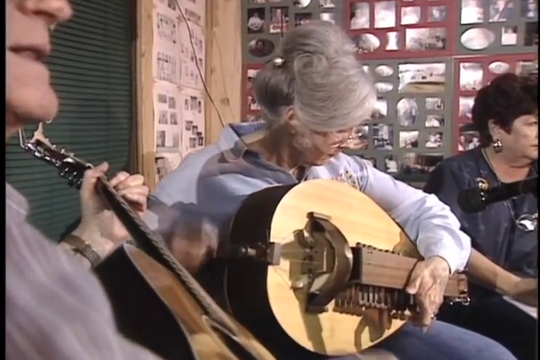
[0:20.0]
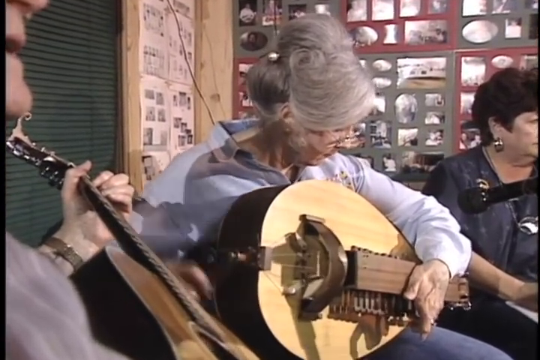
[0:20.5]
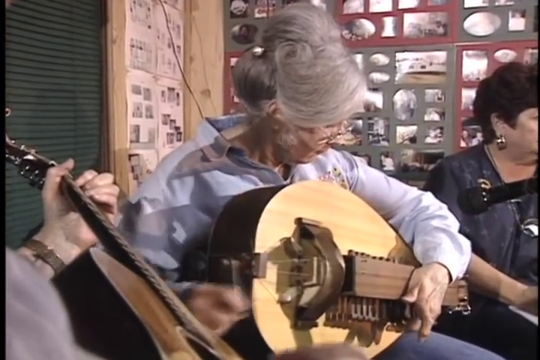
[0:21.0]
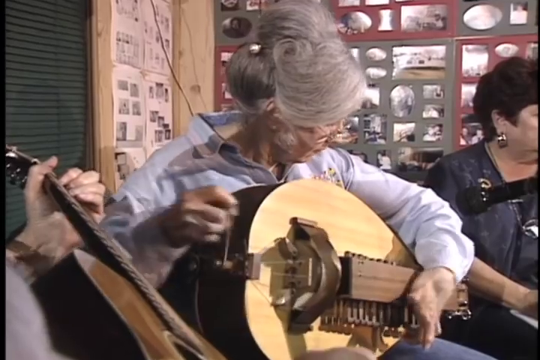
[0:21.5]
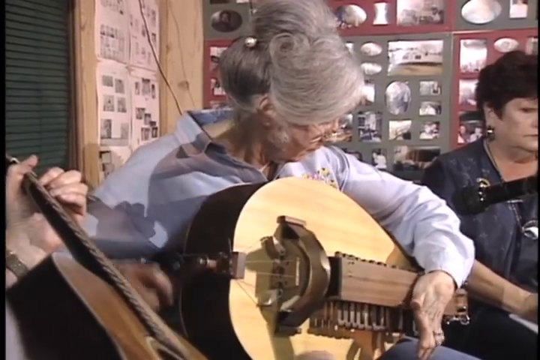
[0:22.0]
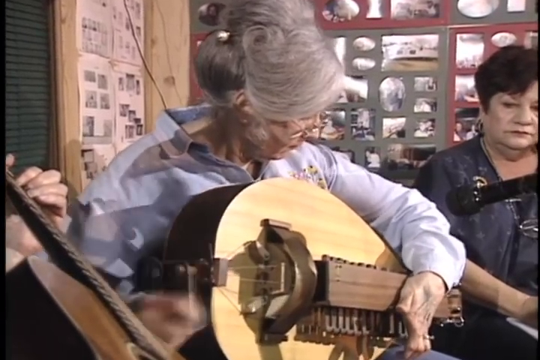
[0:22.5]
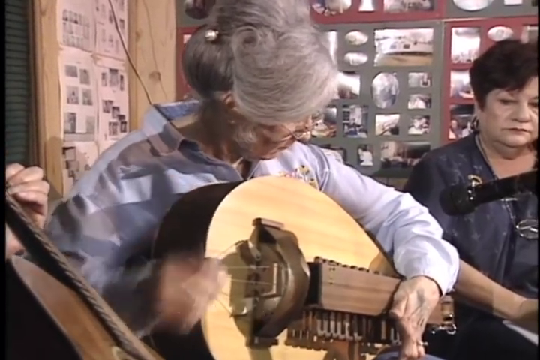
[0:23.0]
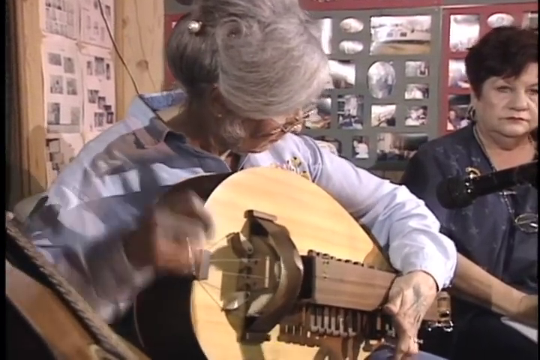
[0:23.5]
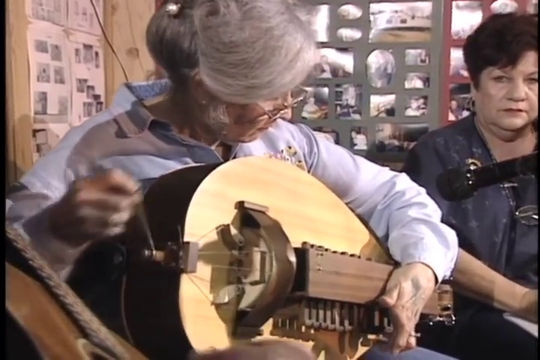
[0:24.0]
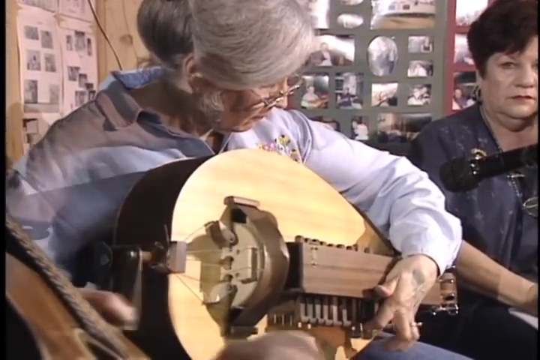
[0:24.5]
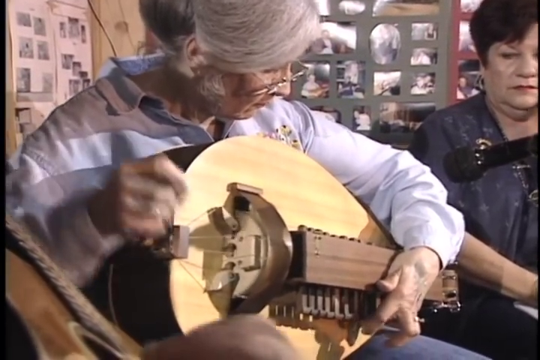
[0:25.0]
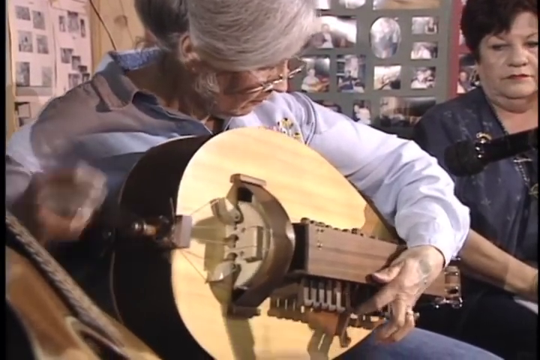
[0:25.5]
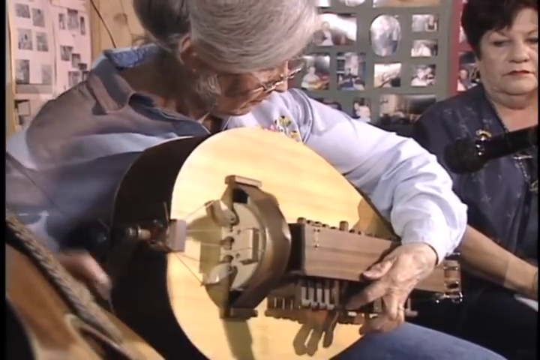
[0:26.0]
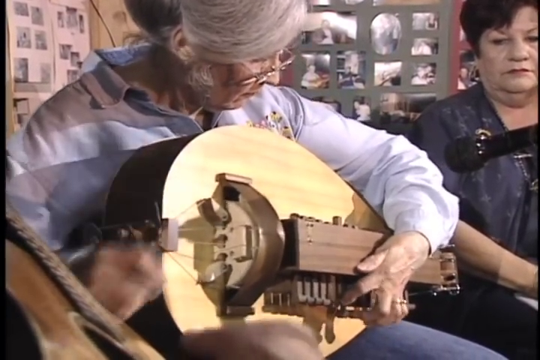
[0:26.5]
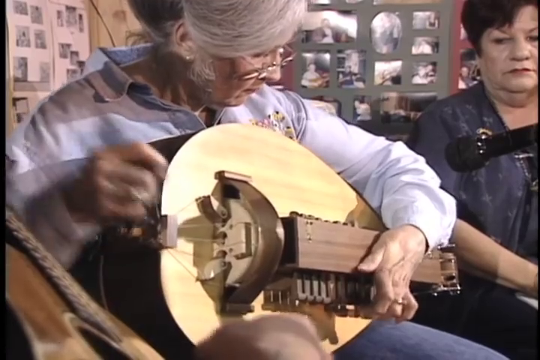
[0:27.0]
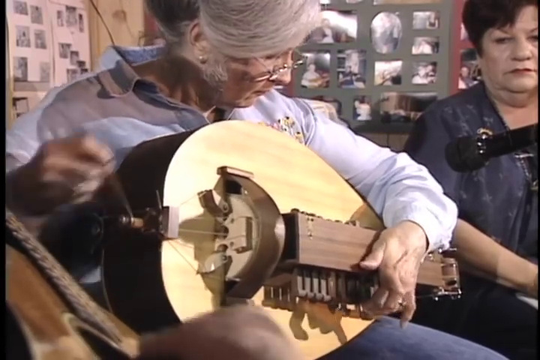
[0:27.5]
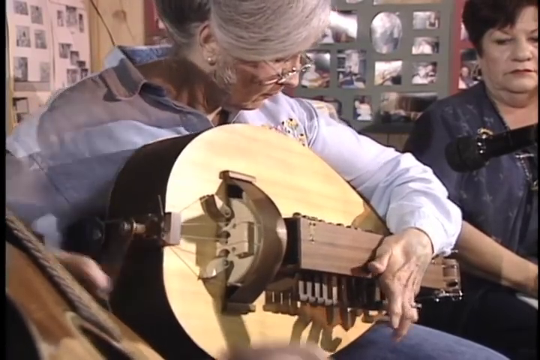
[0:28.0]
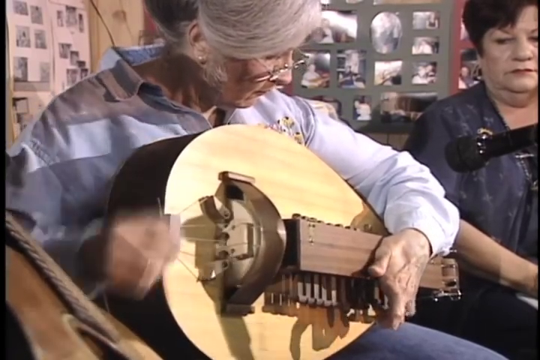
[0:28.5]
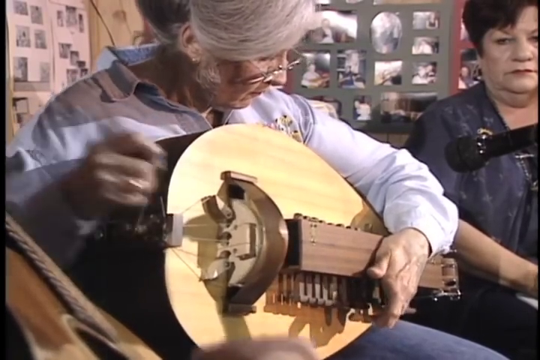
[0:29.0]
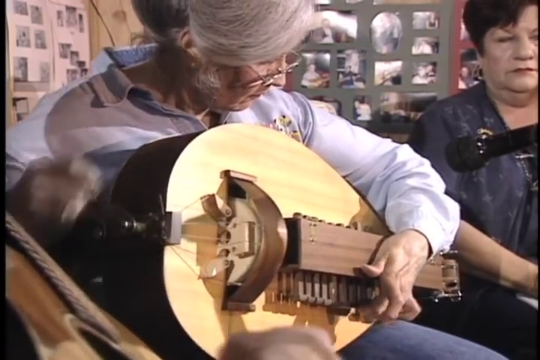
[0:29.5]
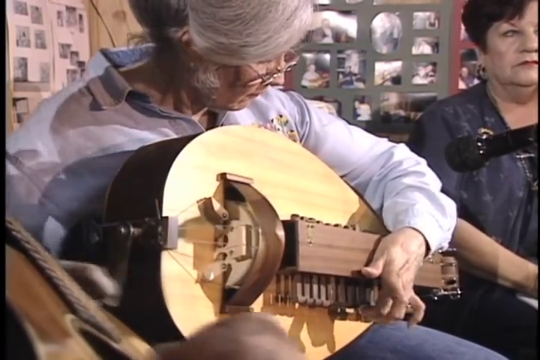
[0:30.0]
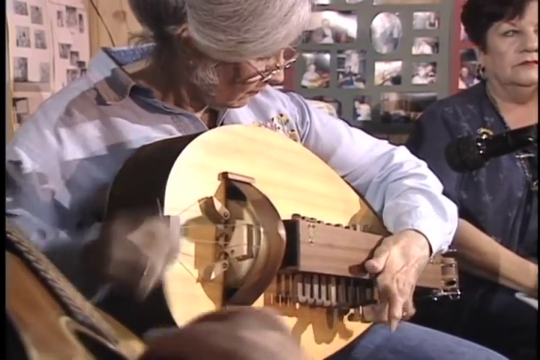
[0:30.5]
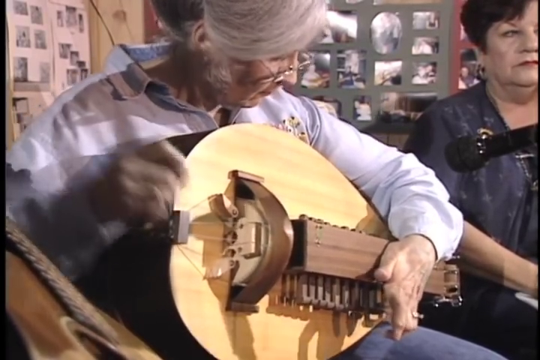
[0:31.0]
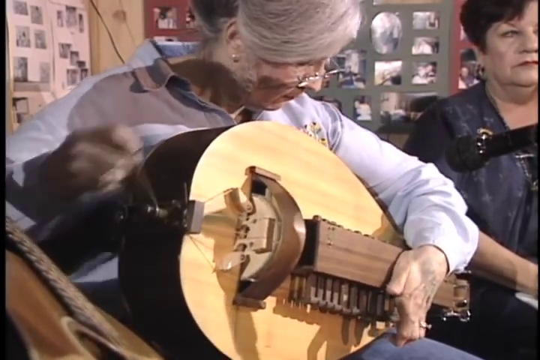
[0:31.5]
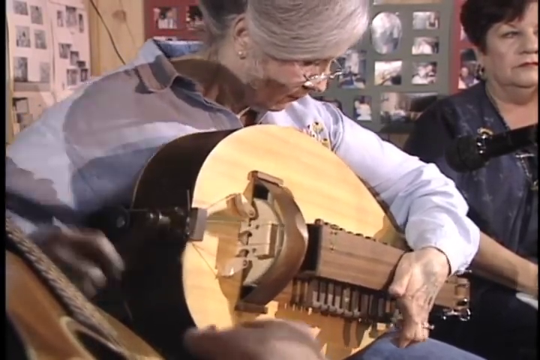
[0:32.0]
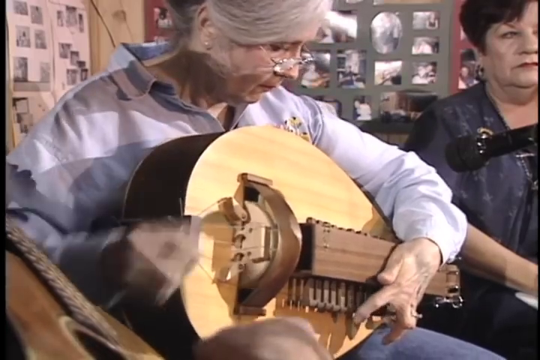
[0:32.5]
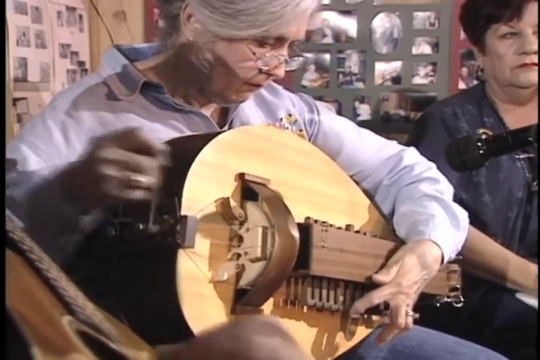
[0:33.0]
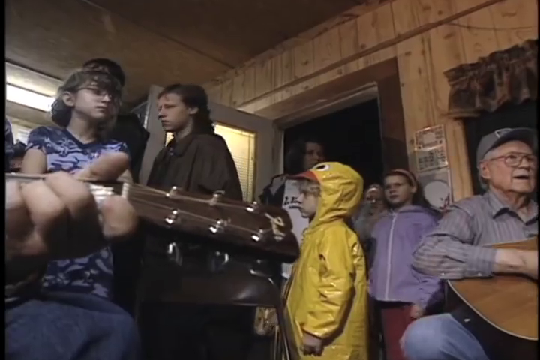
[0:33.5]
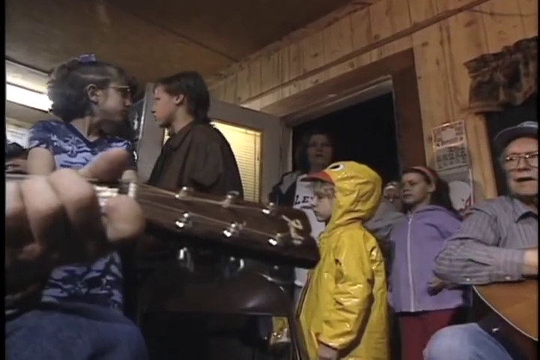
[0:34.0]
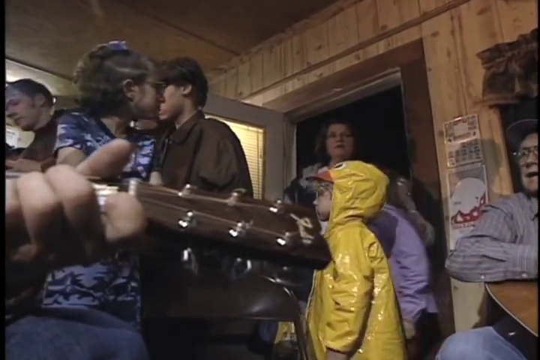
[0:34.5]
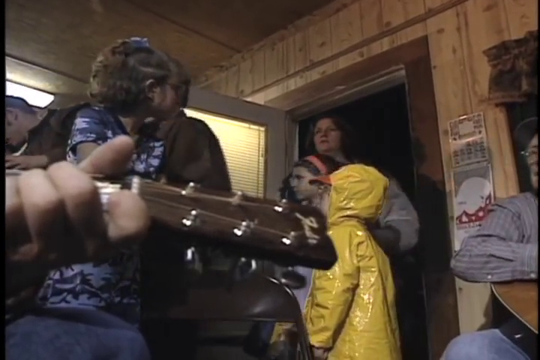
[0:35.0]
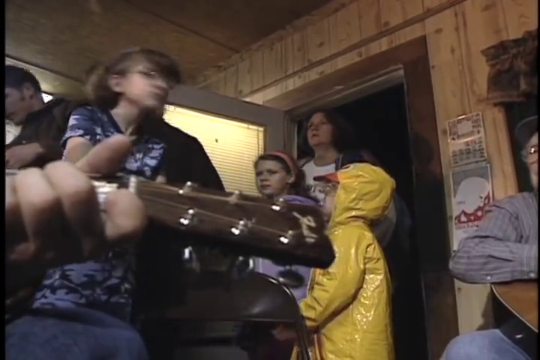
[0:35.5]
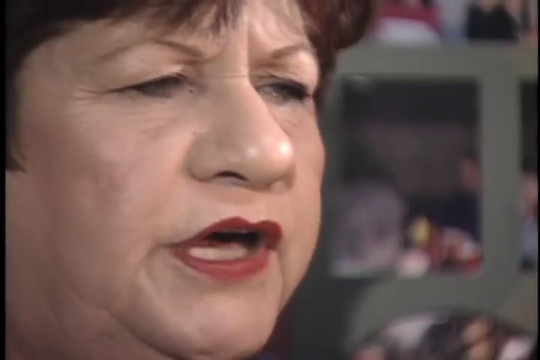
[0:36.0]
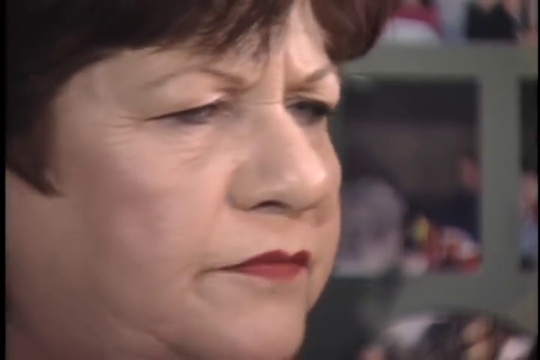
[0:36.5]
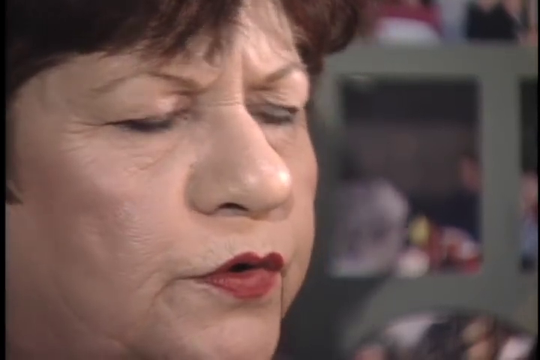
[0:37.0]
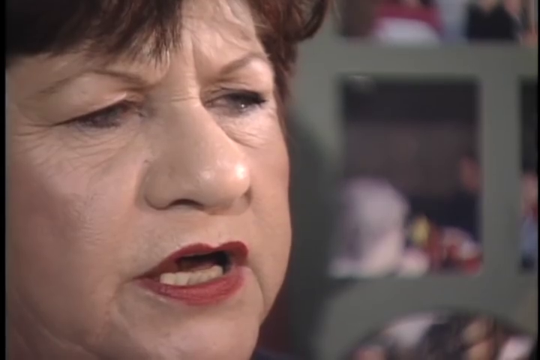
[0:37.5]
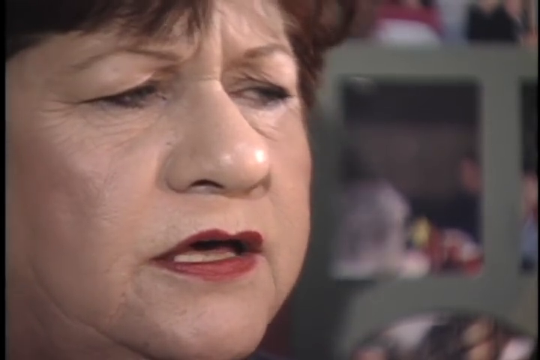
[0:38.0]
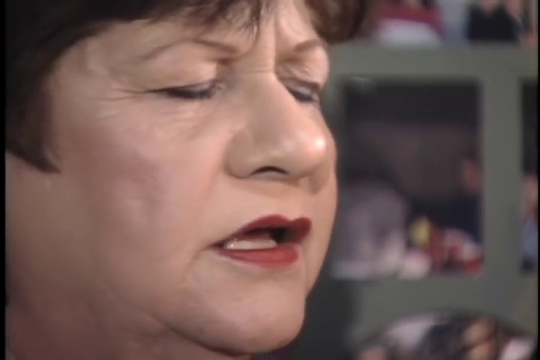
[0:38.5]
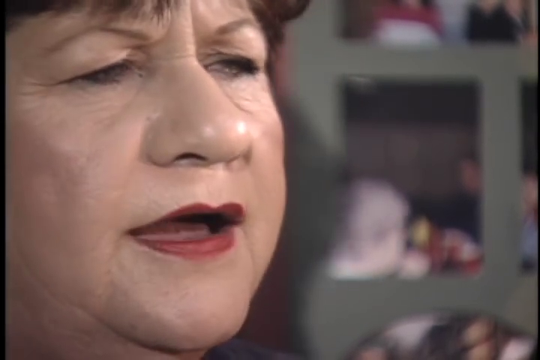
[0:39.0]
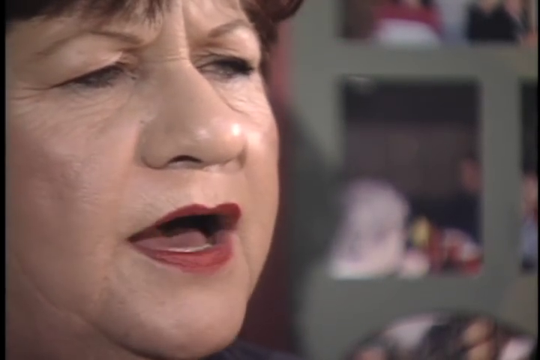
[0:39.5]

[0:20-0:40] The gray-haired woman in the middle plays a lute, turning the handle clockwise with her right hand at varying paces, with her left hand under a part of the lute where there are presumably strings. Next, people who have entered the premises mill around the doorway. In the right foreground is a small blonde child in a yellow waterproof with a peak on the head covering and an eye above it, so the child looks like a chick. The shot then moves to the woman who was third in line earlier. She is sideways on, on the left-hand side of the screen, speaking to the camera. She looks serious and speaks, or possibly sings, in a very sincere but calm way, apparently putting across a message of some sort.